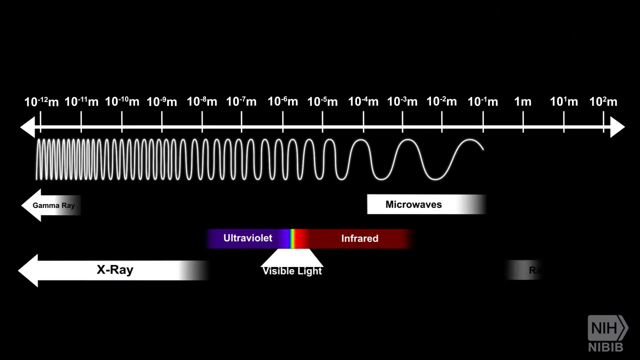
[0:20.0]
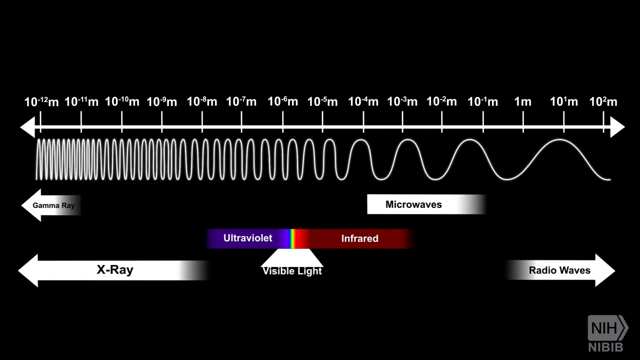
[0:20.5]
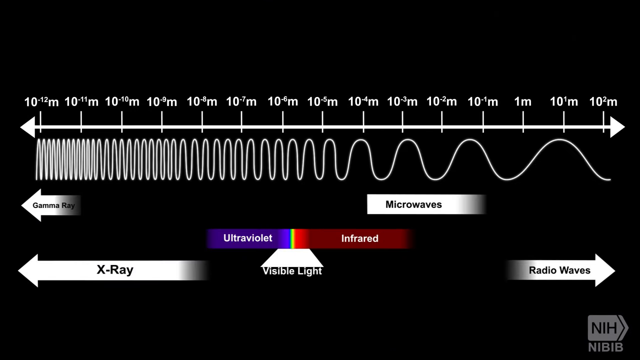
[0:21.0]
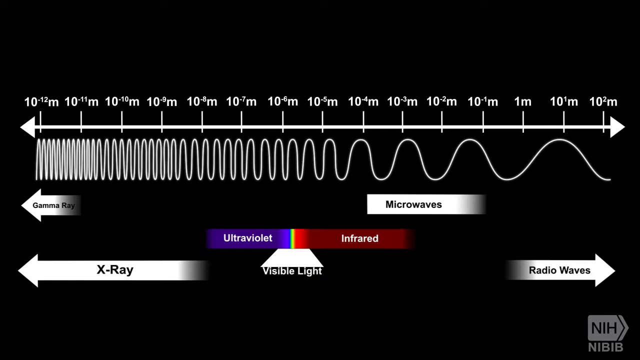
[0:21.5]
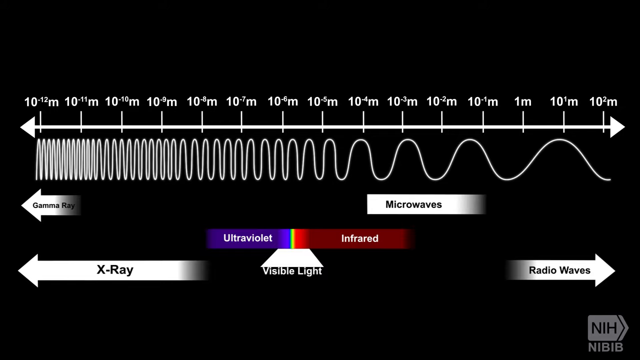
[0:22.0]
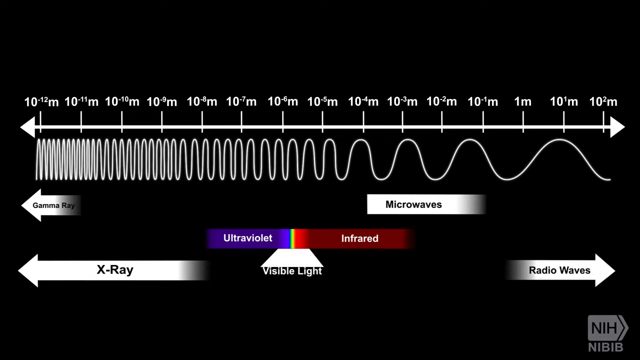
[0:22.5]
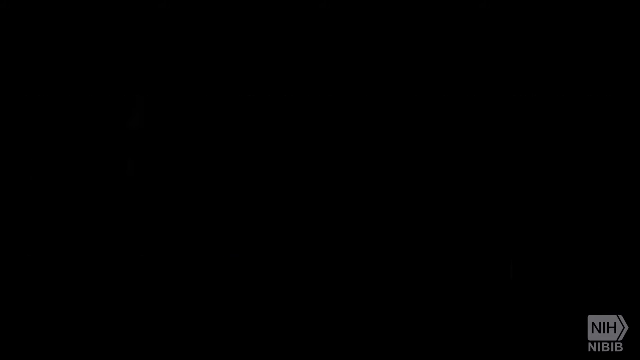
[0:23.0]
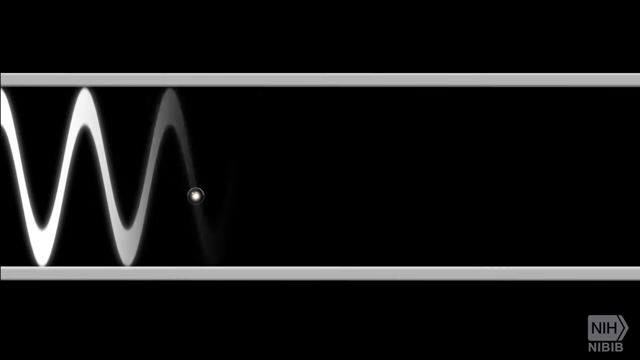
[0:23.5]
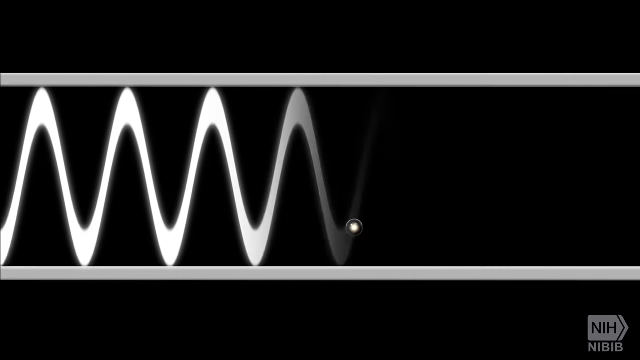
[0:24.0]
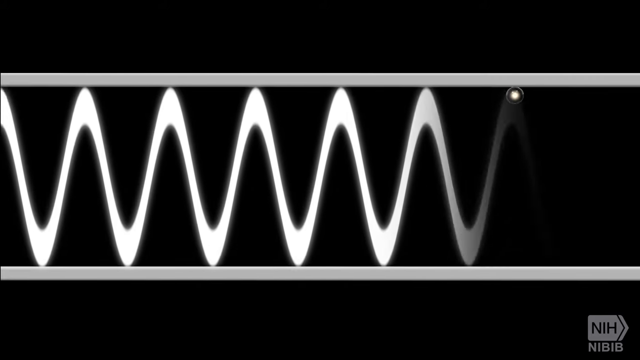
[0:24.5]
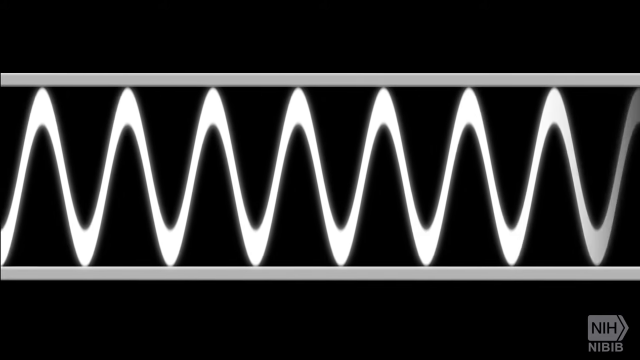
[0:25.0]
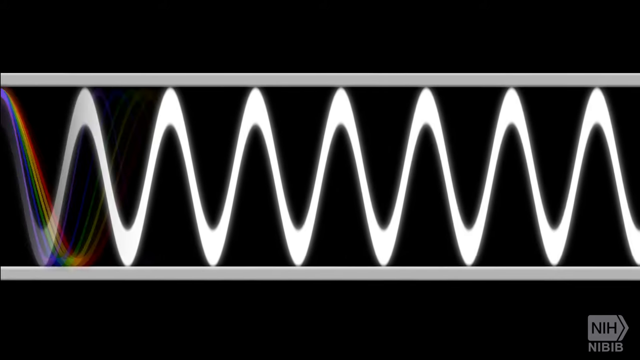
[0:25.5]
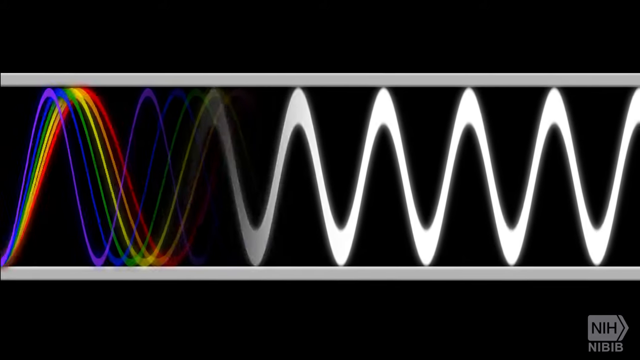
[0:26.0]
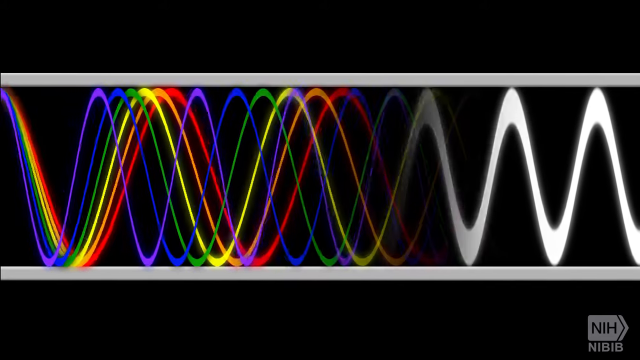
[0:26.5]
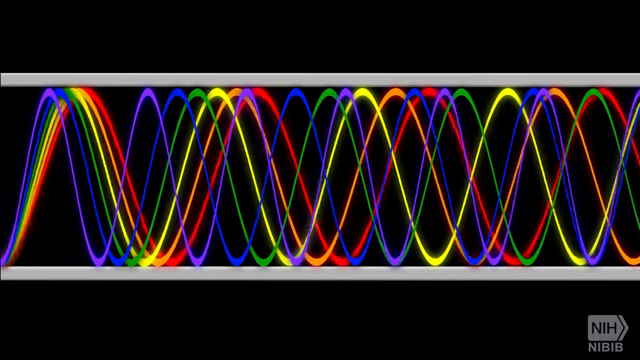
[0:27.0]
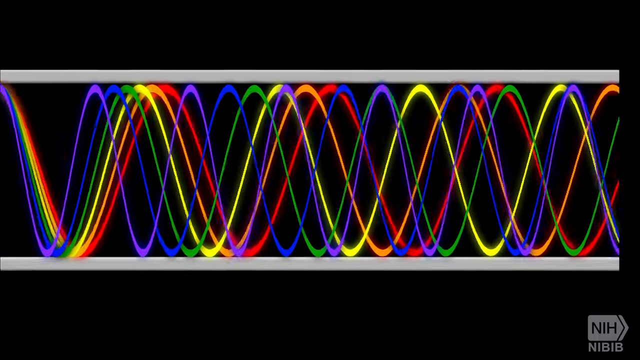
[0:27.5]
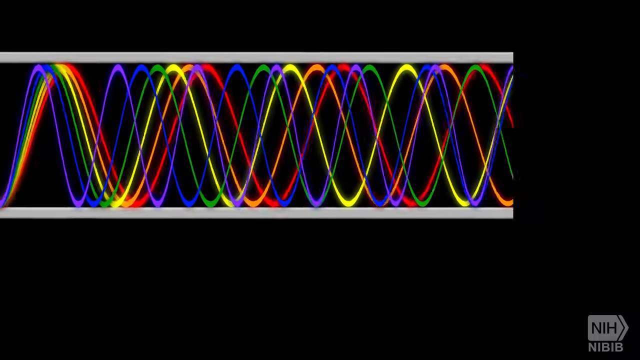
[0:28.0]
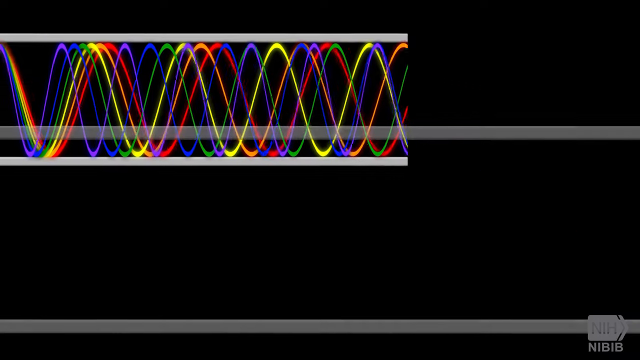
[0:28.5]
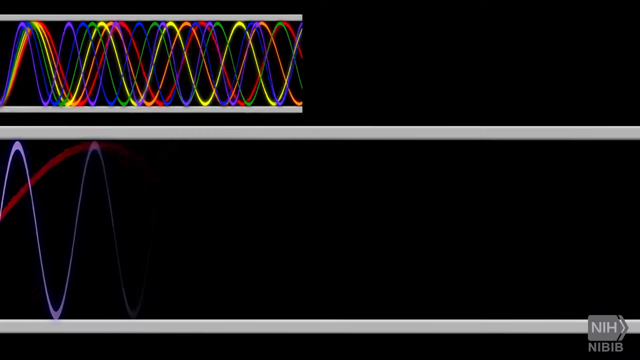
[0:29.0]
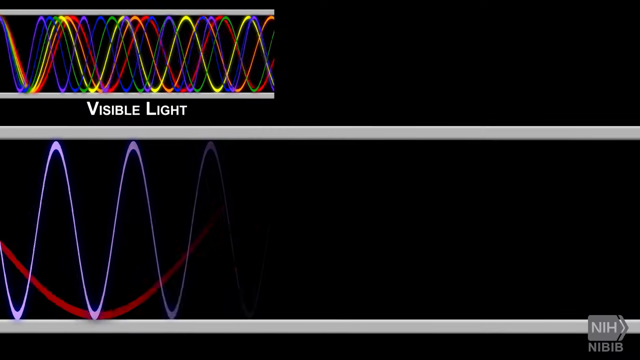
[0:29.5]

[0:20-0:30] A graph appears with a white timeline-like line marked with various hash marks and an arrow at each end. The tab at the far left reads "10 to the negative 12 meters" and the far right shows 10 to the second power of meters. Below the line are rounded wavelength pattern lines that are very close together at the left end and become increasingly spaced apart toward the right. Below, on the left, a white arrow pointing left reads "gamma ray", while on the right a white rectangle shows "microwaves". Further below, "ultraviolet" appears in a purple box, followed by very small blue and yellow colored lines, and on the other side "infrared" appears in white text on a red background at about the 10 to the 6 meters mark. Between those two, a white bar below reads "visible light". Lastly, at the bottom left is "x-ray" with a white arrow pointing left, and at the far right "radio waves" with an arrow pointing right, in white with black text. The video then moves to a white wavelength pattern running across the screen, followed by the same pattern in multiple rainbow-colored lines, which then shrinks into a small explanation of visible light.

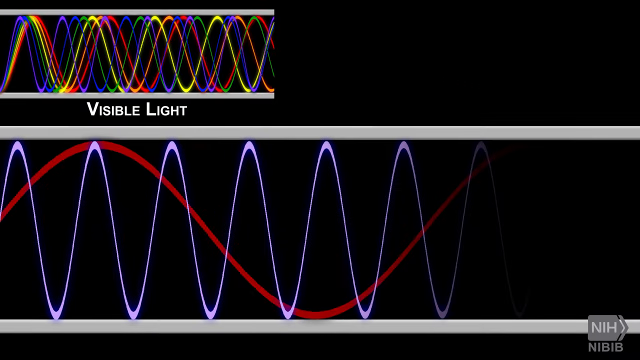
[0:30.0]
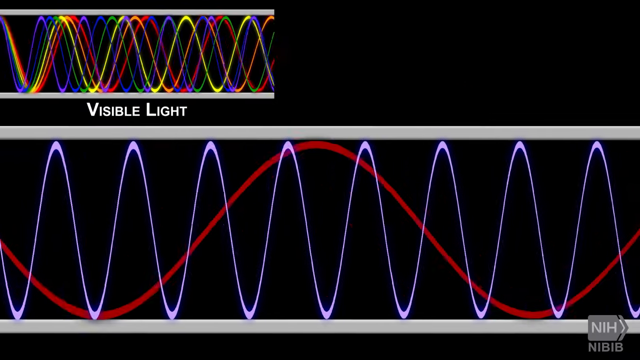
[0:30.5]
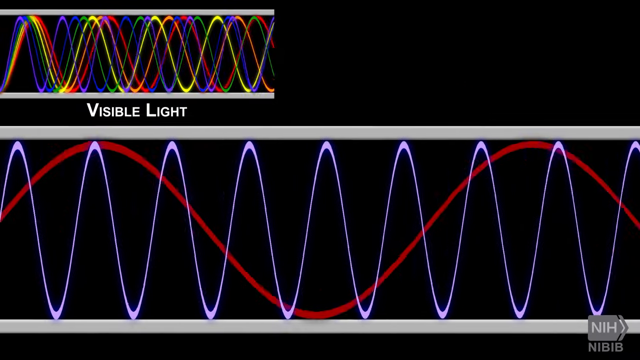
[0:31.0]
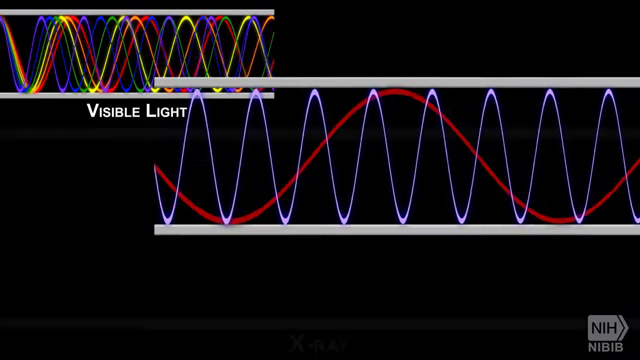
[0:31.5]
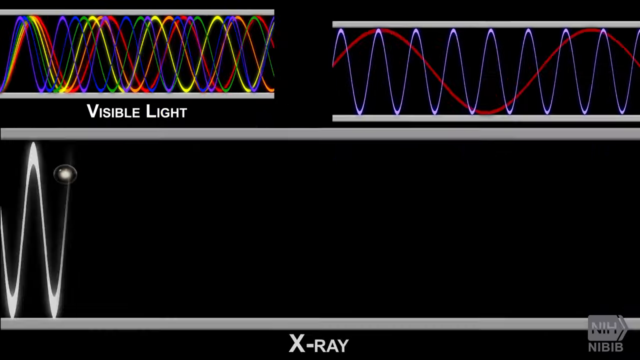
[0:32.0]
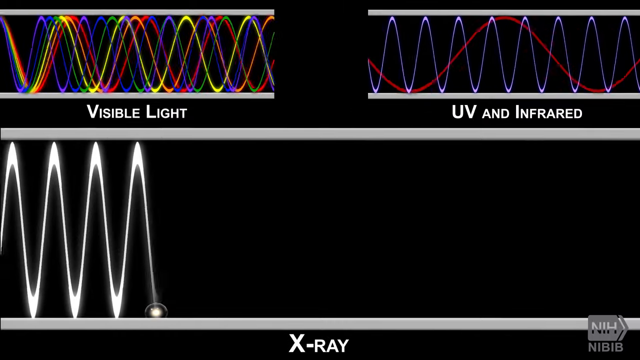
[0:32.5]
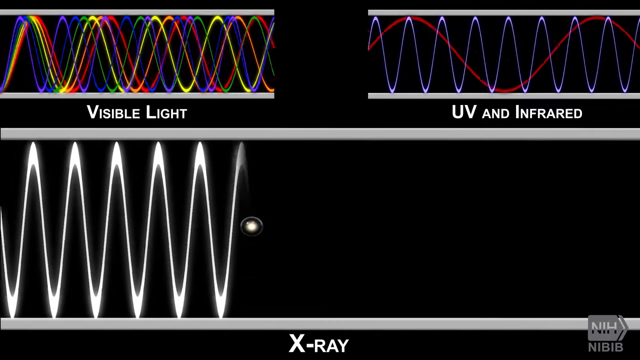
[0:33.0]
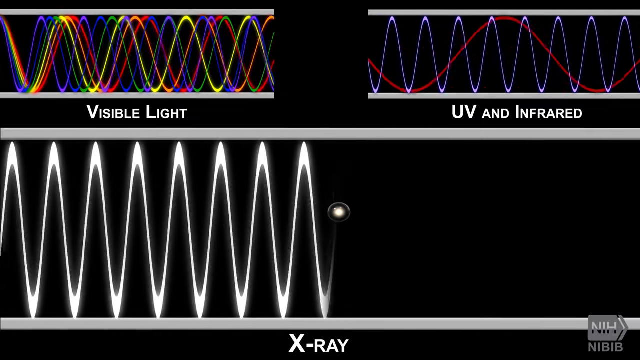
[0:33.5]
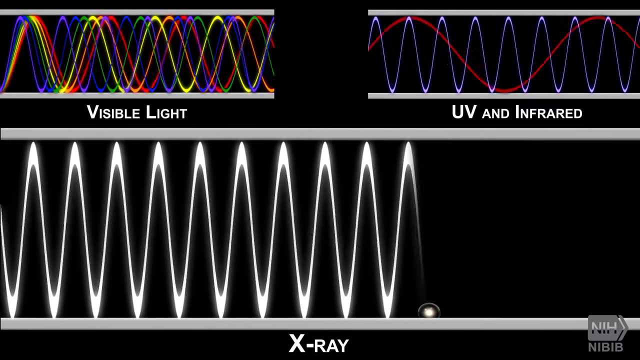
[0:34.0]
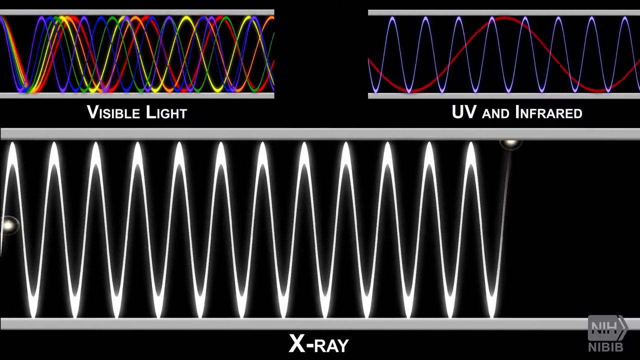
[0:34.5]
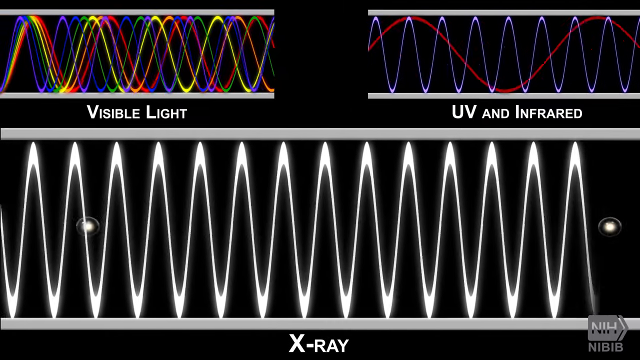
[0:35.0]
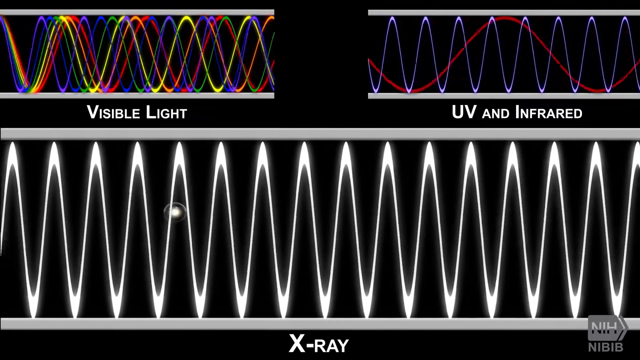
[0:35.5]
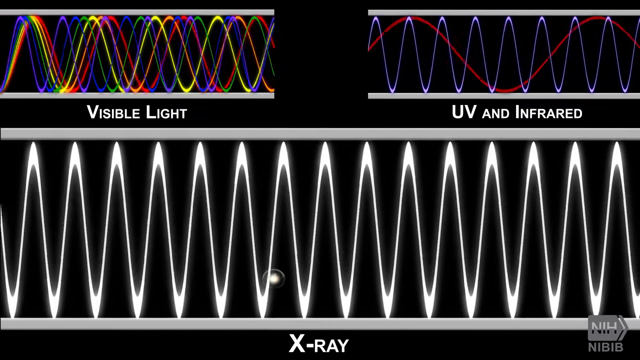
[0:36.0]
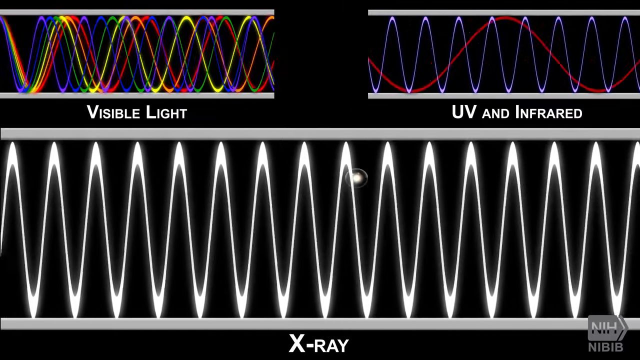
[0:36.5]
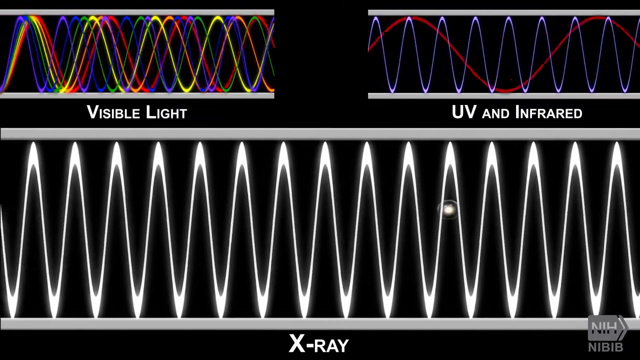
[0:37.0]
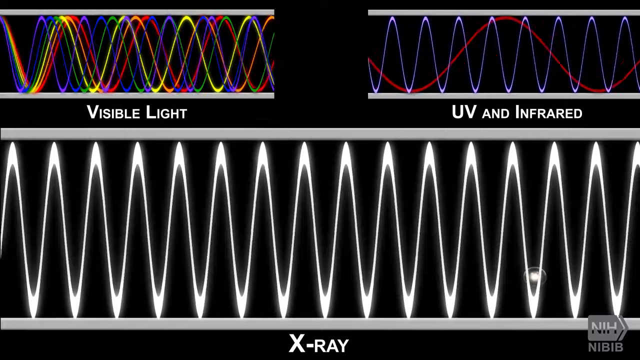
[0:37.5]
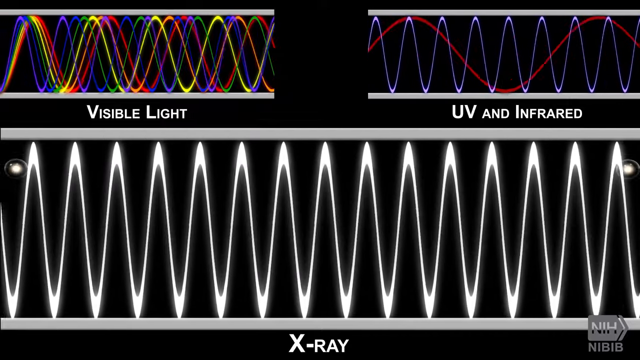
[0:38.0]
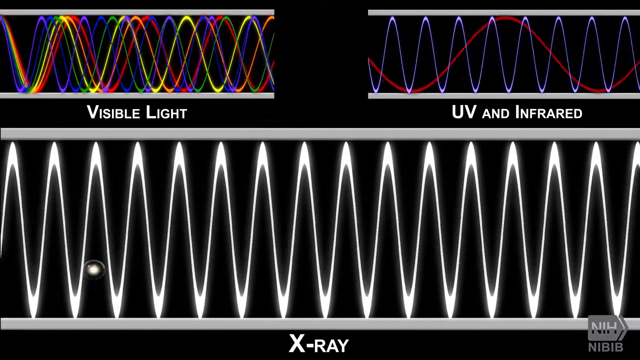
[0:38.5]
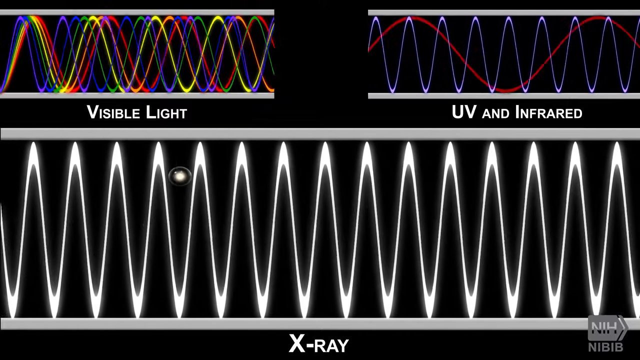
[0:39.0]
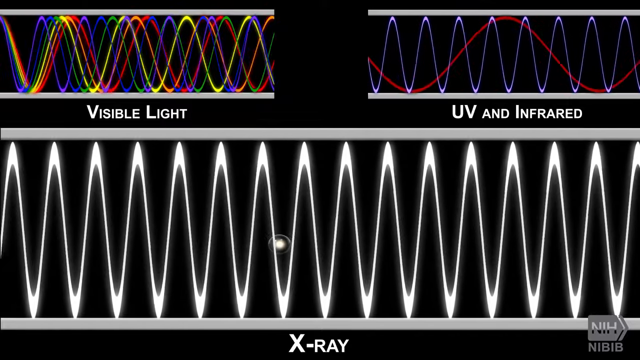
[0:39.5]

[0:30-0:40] In the upper left-hand corner is a small image of overlapping wavelength lines in multiple rainbow colors, with the words "visible light" in white below it. Below that are purple wavelength lines of somewhat shorter wavelengths and a very spaced-out red wavelength line overlaying them; they all kind of travel and move, and the text "UV" and "infrared" appears before that image zooms to the top right corner. On the bottom portion, short white wavelengths travel across the screen, and a ball-like figure traces the wavelength lines, followed by another ball that follows the wavelength line as well.